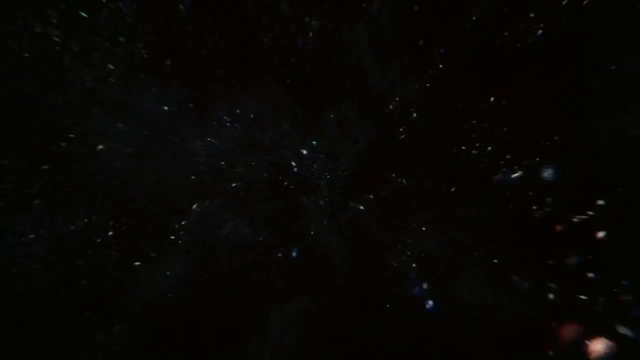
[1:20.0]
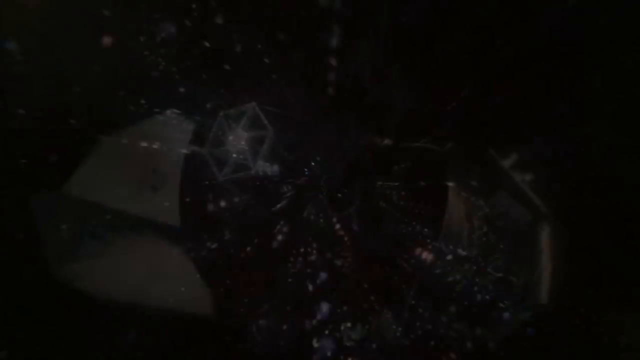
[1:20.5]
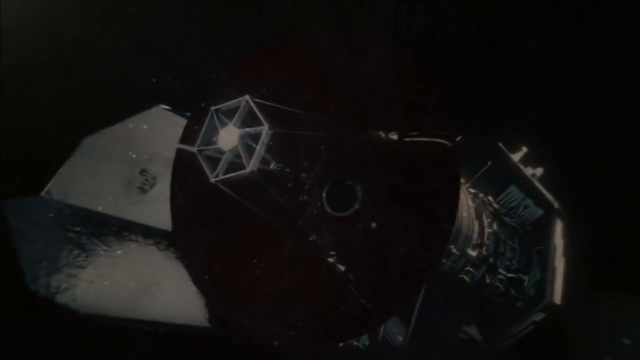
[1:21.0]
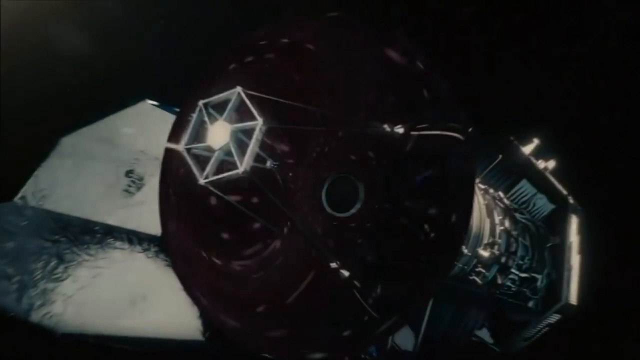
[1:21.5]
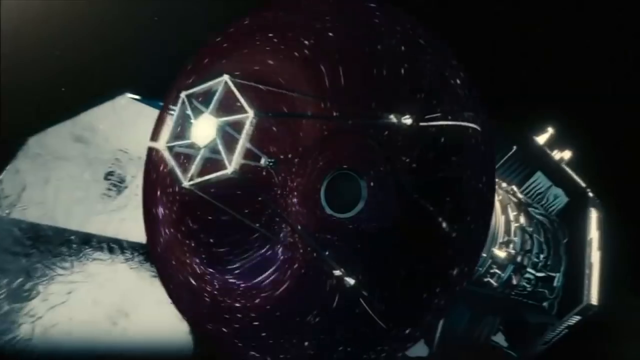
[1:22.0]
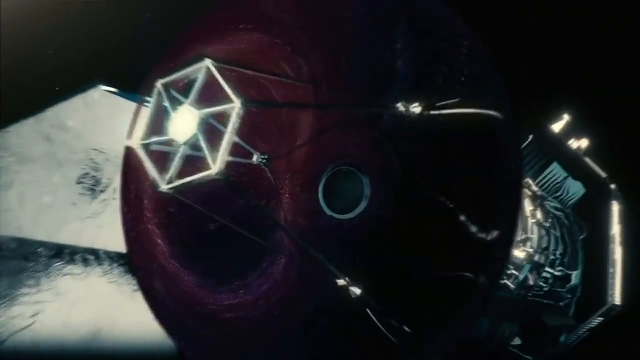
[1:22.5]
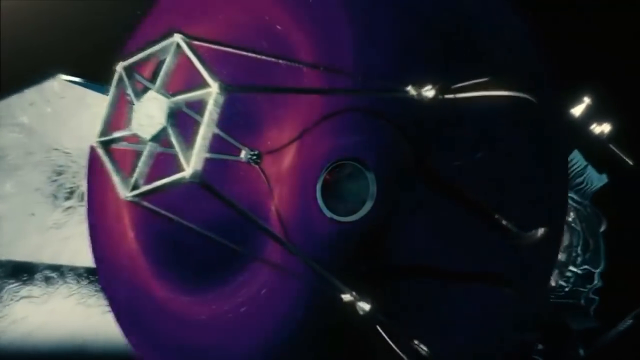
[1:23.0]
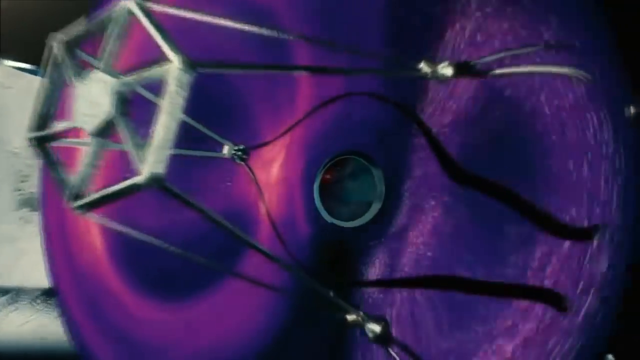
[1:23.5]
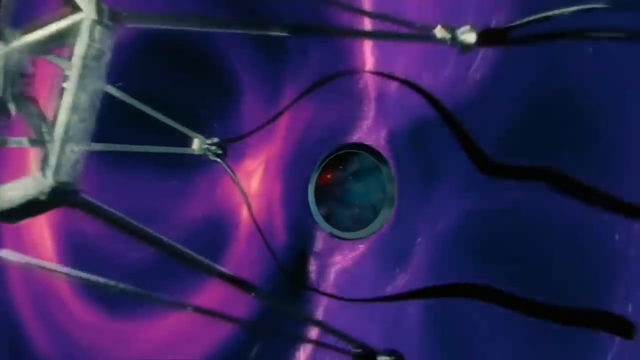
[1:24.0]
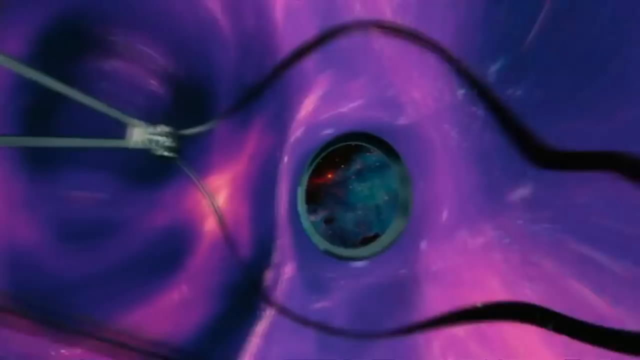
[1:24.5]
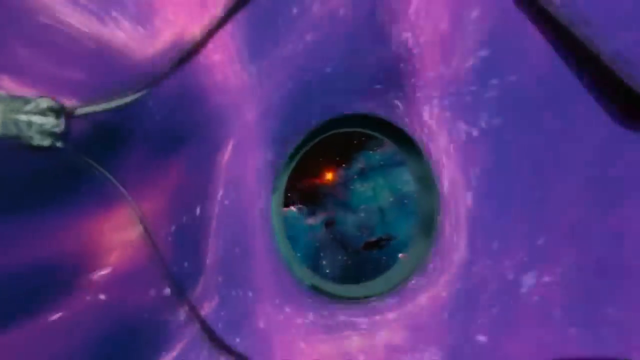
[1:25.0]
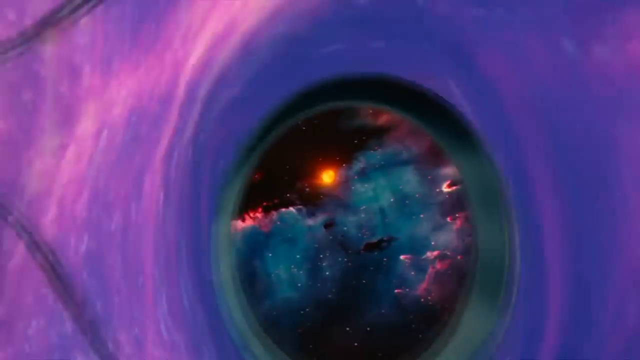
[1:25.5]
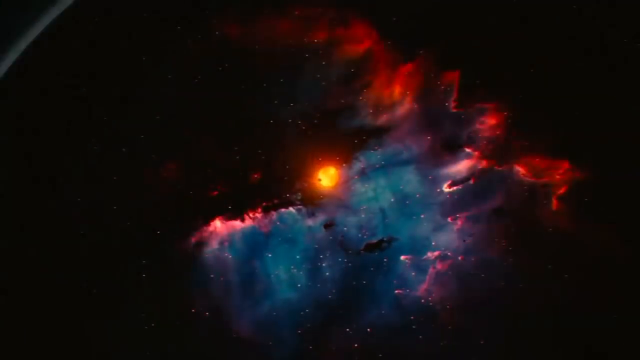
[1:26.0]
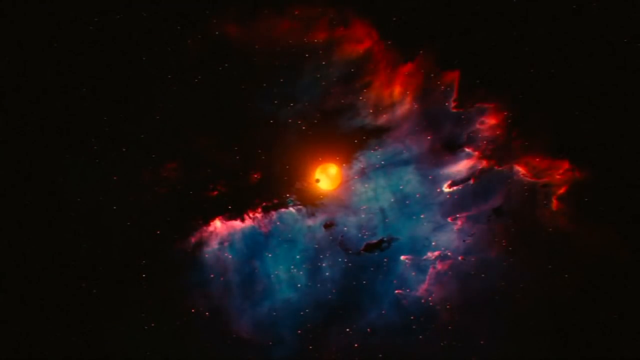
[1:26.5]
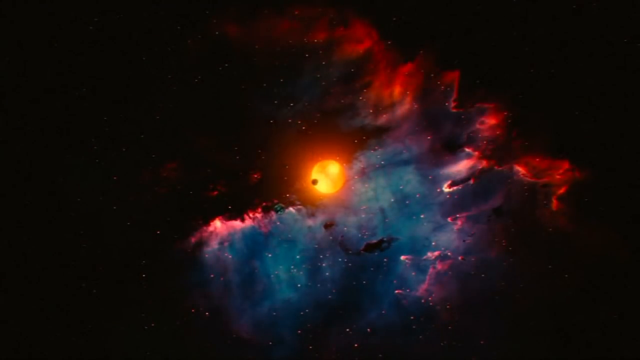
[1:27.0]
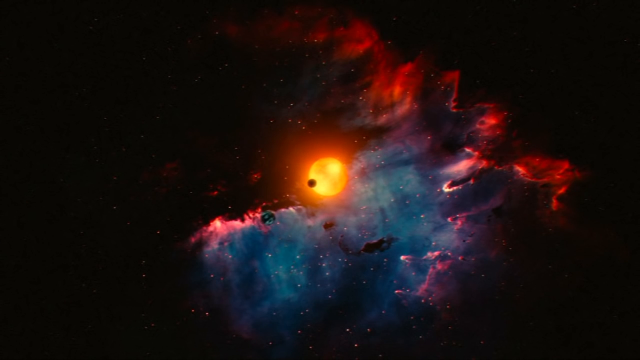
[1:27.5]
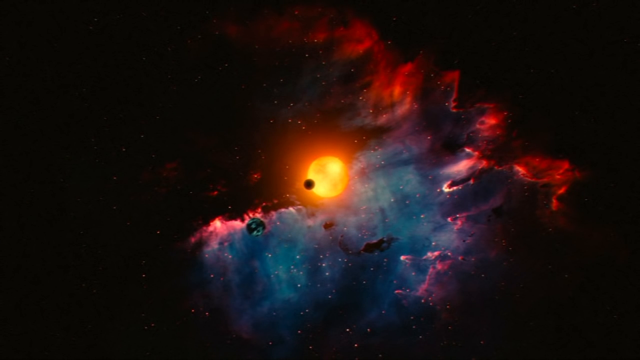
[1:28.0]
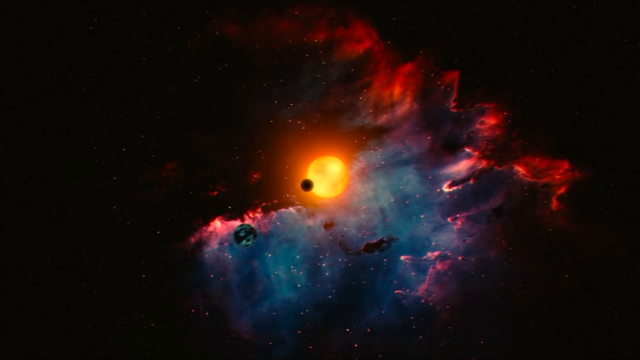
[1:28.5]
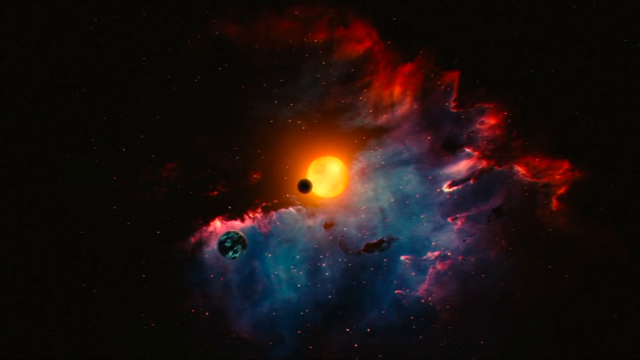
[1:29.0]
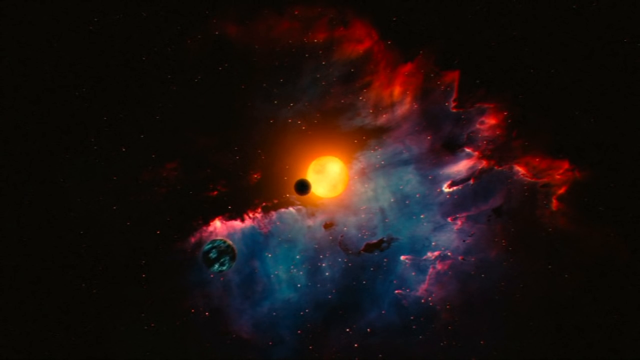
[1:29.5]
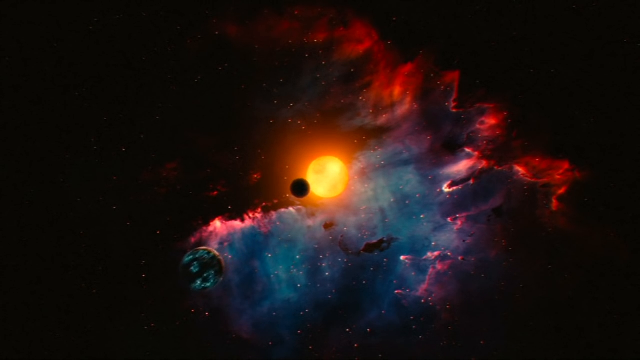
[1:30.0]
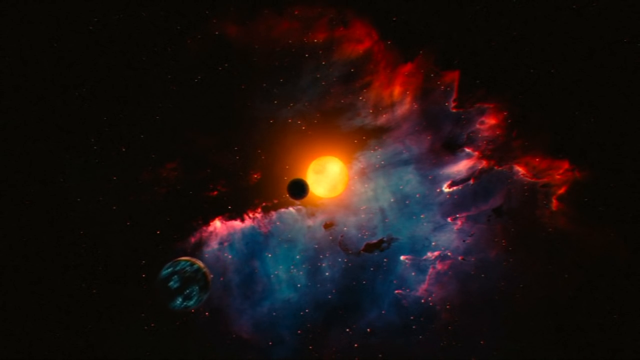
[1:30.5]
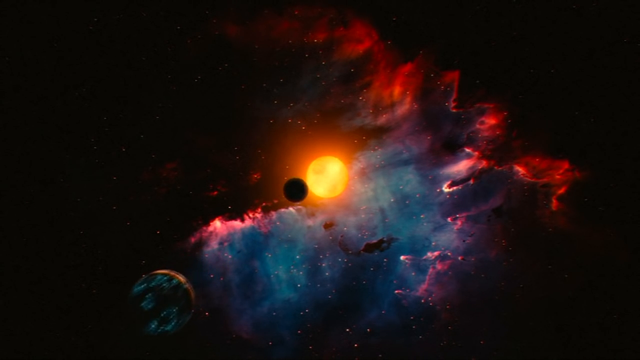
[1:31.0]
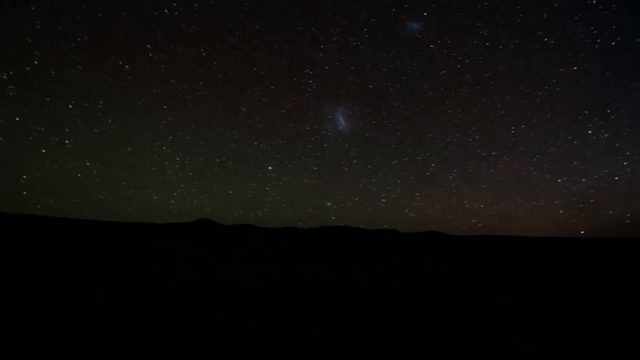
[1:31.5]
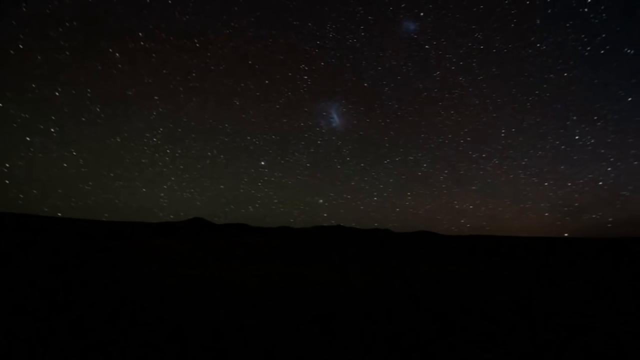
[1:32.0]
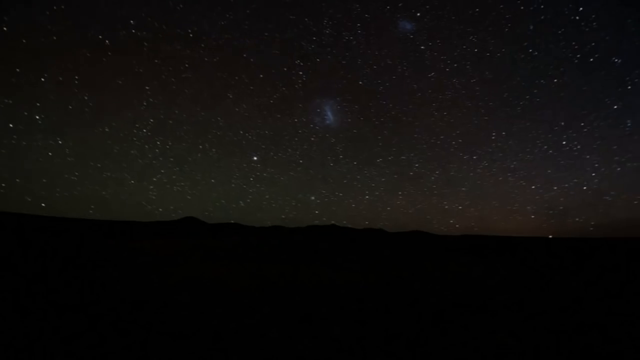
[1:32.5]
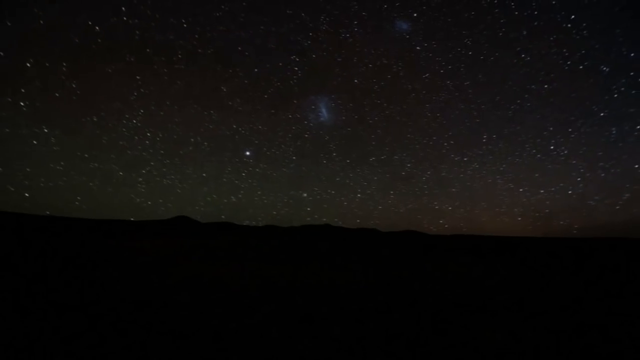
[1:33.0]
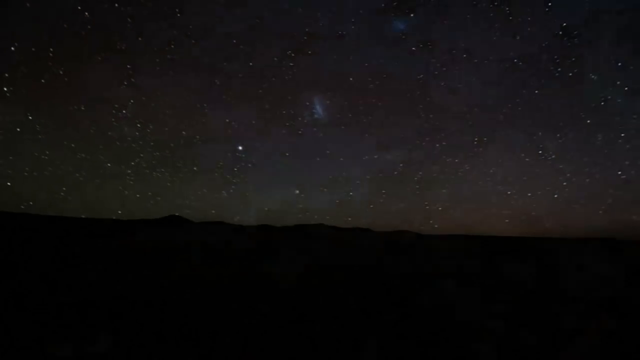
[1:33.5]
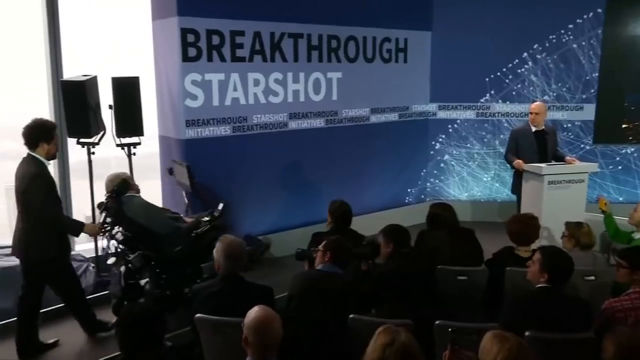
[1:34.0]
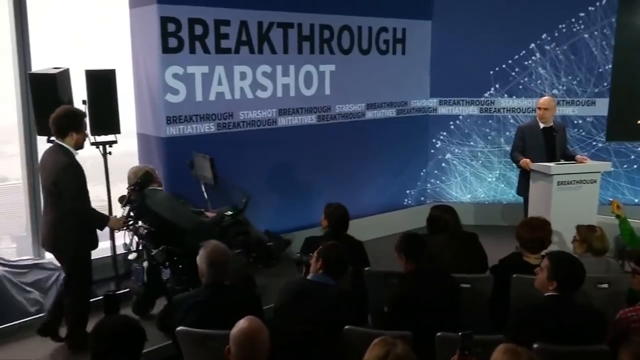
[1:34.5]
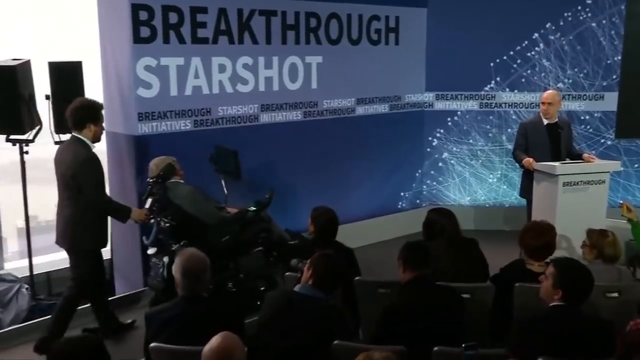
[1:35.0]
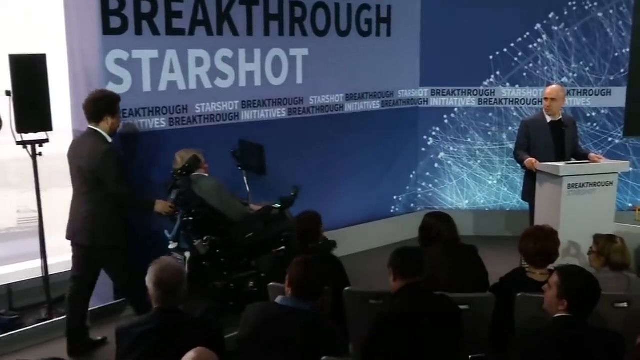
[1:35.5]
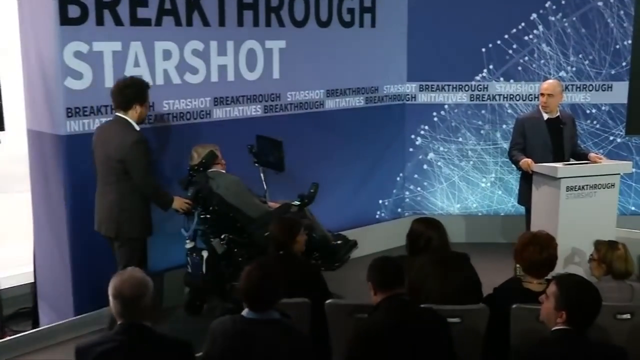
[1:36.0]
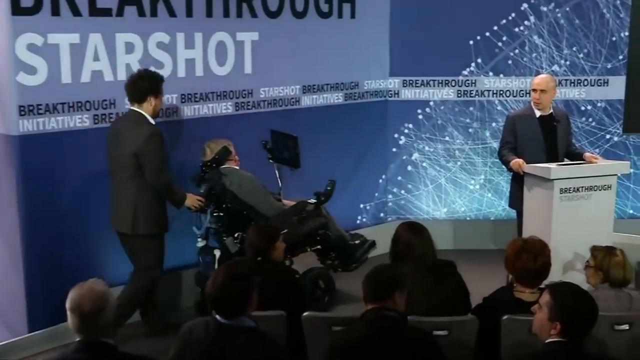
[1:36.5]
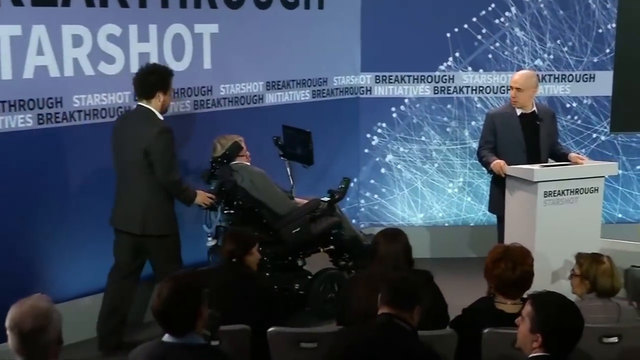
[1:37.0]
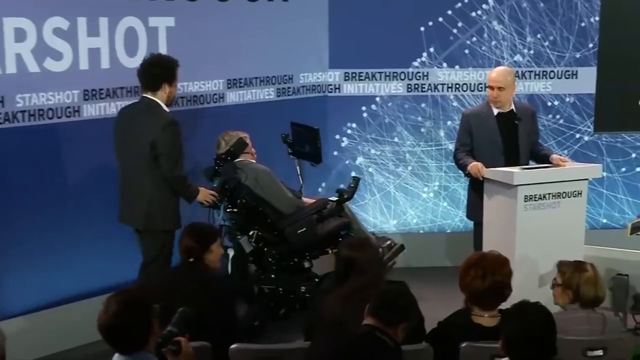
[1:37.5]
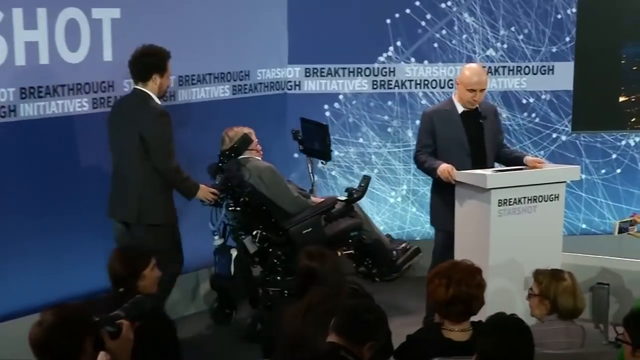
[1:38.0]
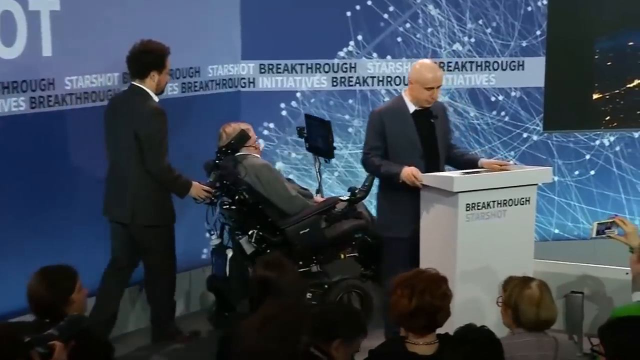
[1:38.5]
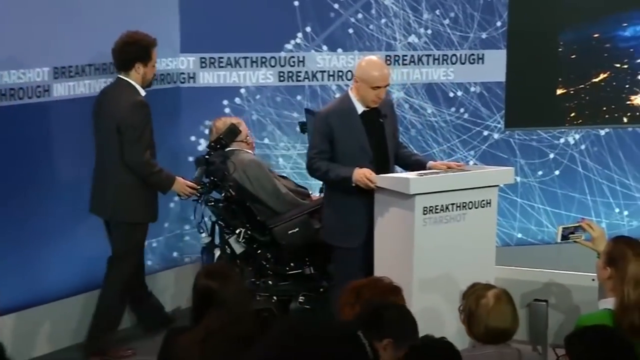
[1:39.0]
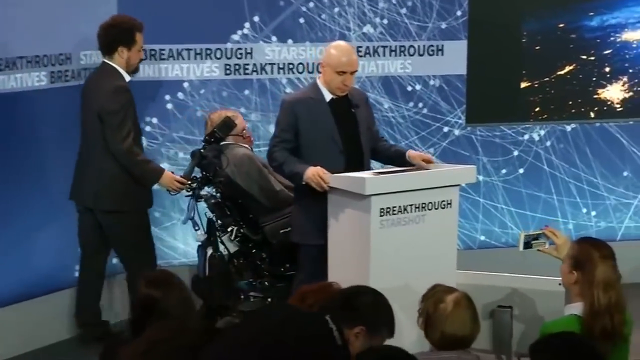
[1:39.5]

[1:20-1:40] The space satellite is shown in the atmosphere. The camera spans through the hole, revealing the atmosphere with the sun or another planet in the sky, what look like stars around it, dark clouds, and bits of rock moving towards the viewer. A short shot of the night sky full of stars follows; it looks as though it could have been taken from Earth. Stephen Hawking is then wheeled onto the stage by a man in a suit. The background says "Breakthrough Starshot", and it looks like some sort of conference or presentation. Members of the audience are visible, and a key speaker stands at a podium with "Breakthrough Starshot" written on its side. The man wheels Hawking onto the center of the stage, just next to the speaker. Audience members watch and capture the events on video with their mobile phones.